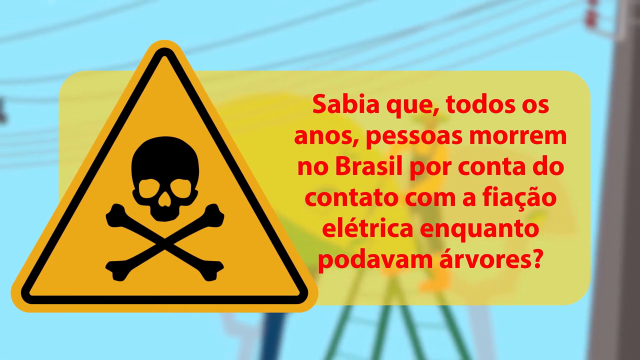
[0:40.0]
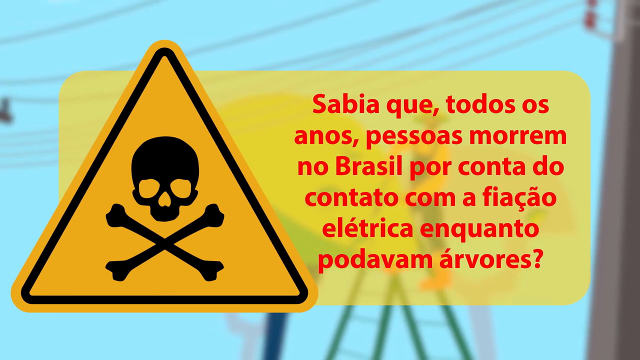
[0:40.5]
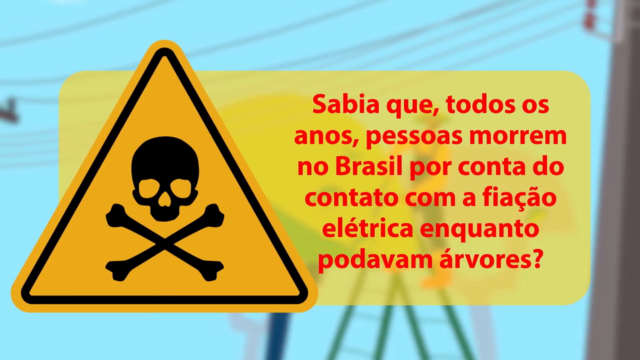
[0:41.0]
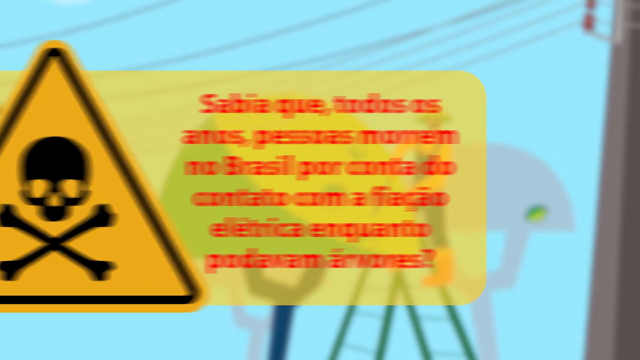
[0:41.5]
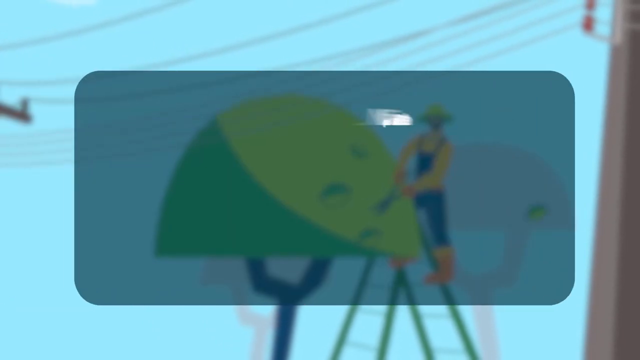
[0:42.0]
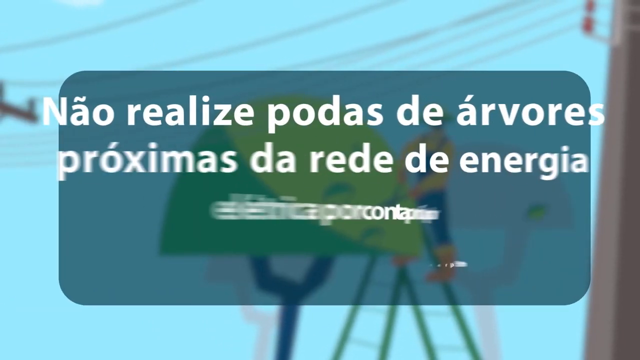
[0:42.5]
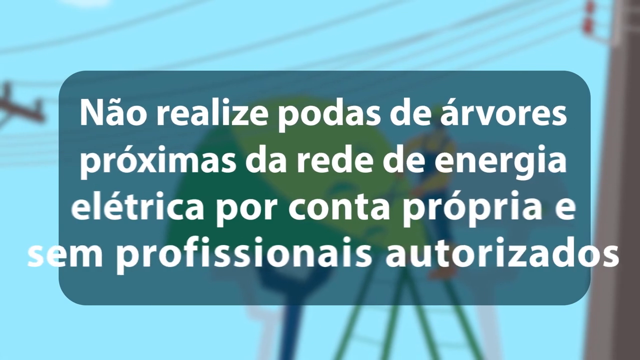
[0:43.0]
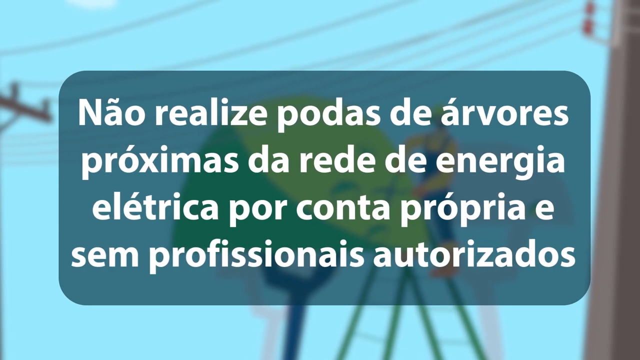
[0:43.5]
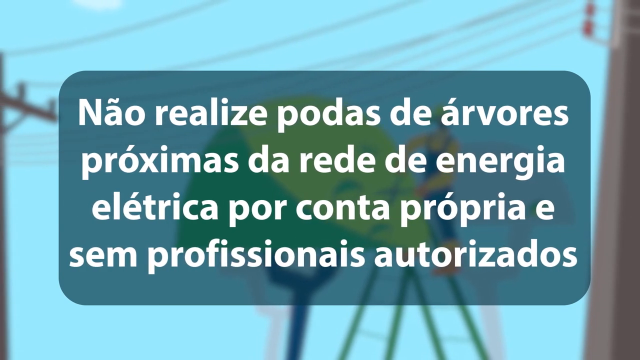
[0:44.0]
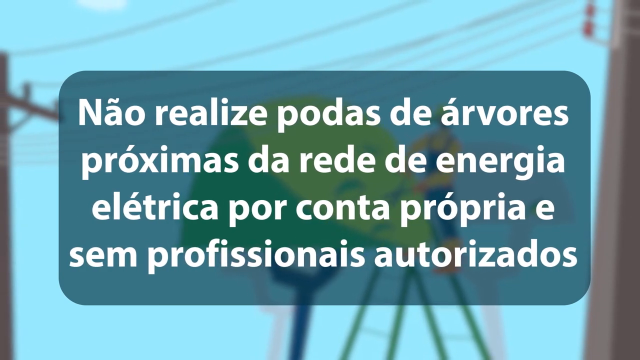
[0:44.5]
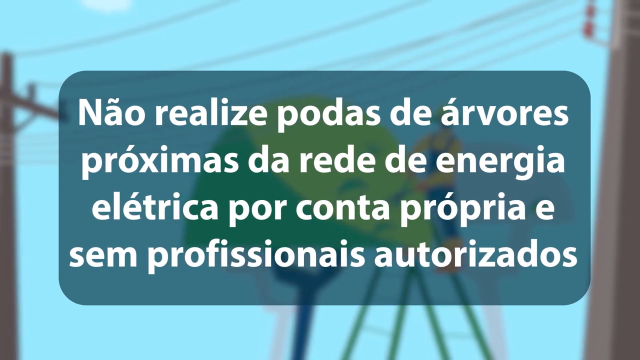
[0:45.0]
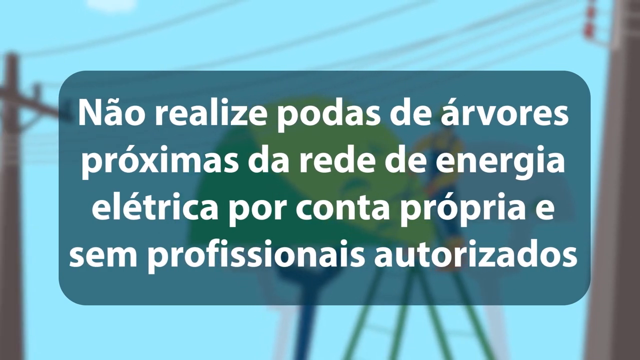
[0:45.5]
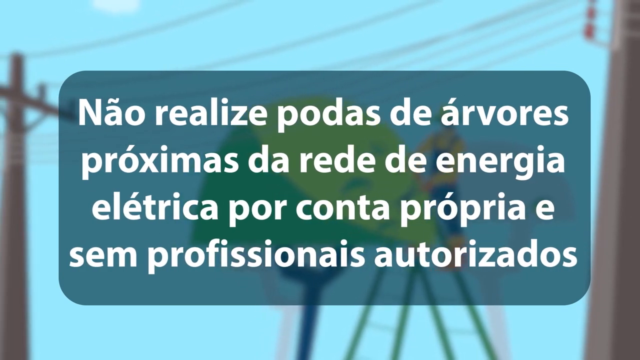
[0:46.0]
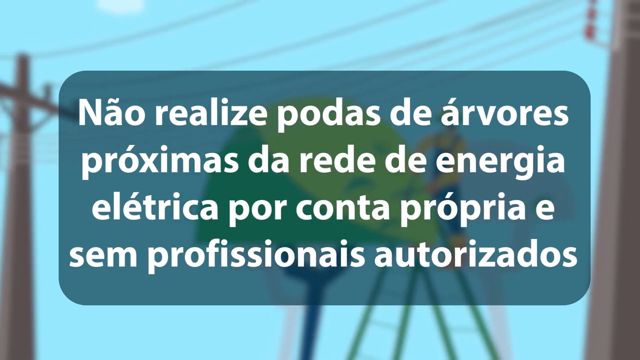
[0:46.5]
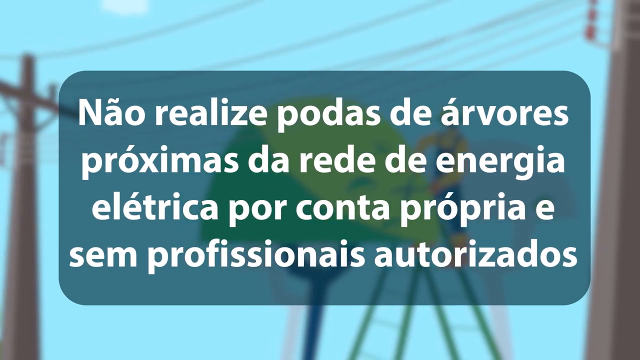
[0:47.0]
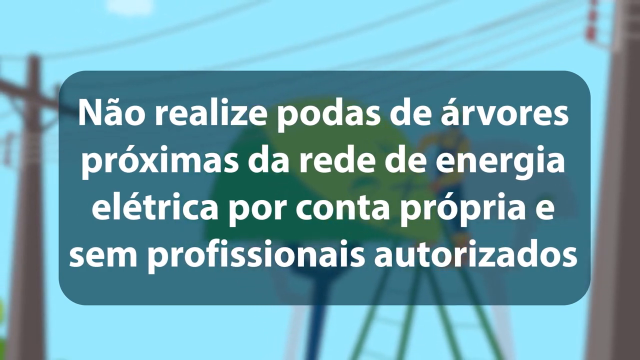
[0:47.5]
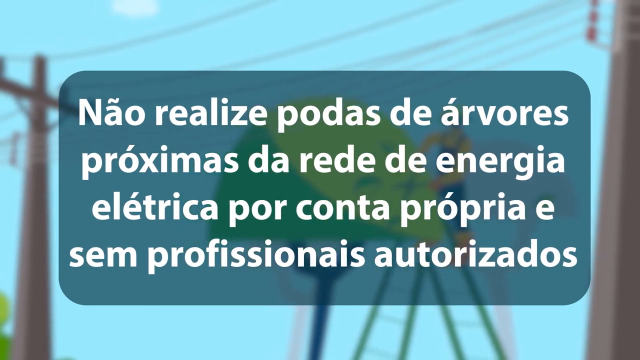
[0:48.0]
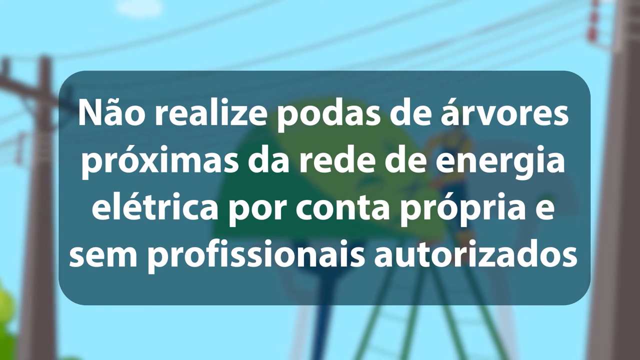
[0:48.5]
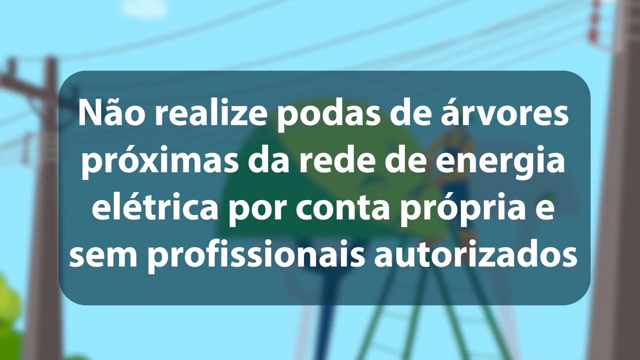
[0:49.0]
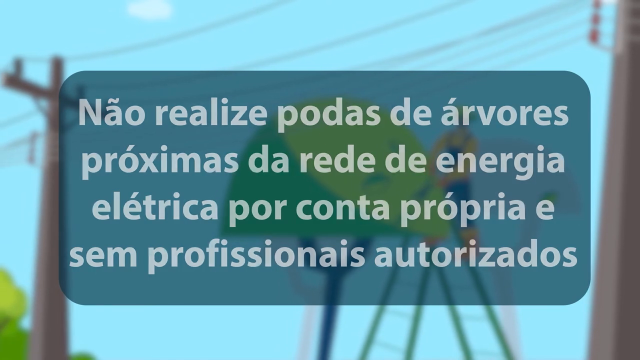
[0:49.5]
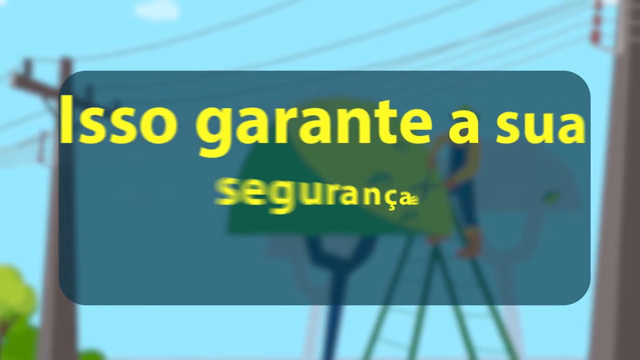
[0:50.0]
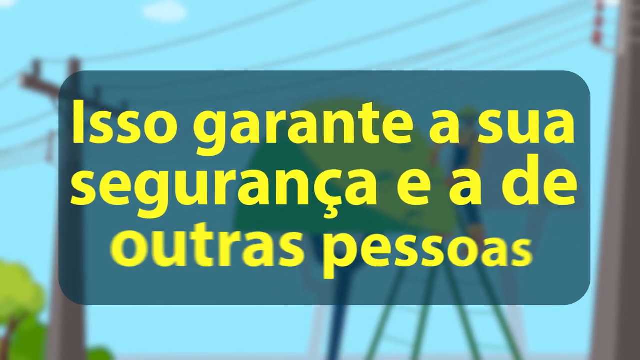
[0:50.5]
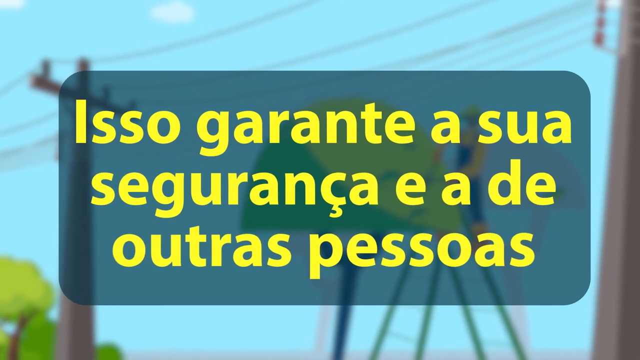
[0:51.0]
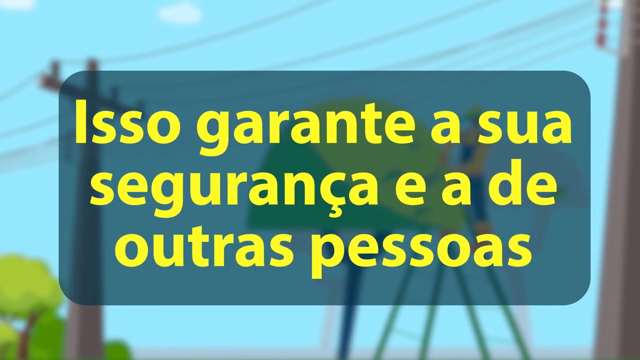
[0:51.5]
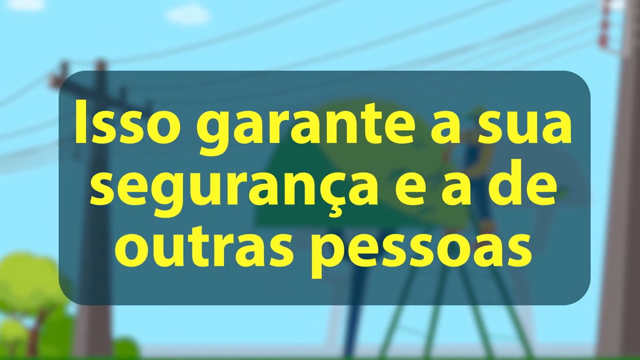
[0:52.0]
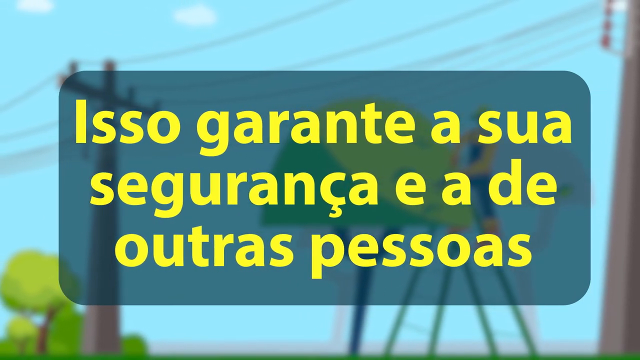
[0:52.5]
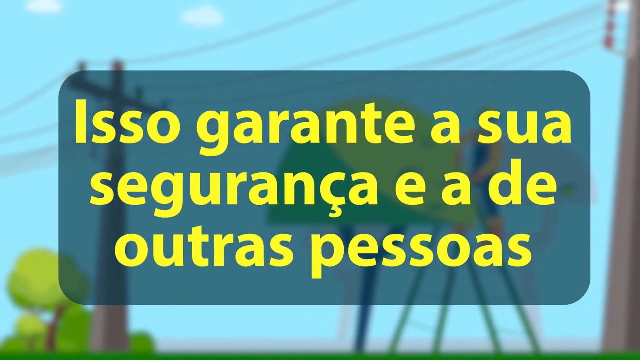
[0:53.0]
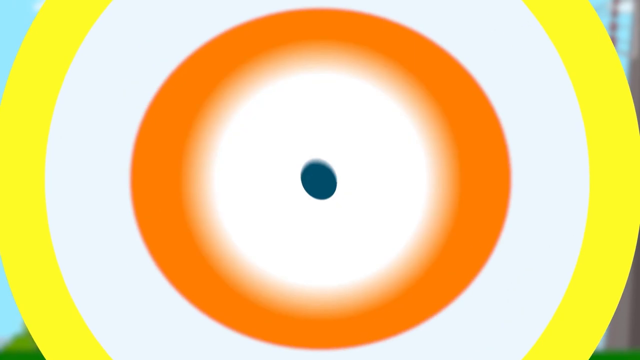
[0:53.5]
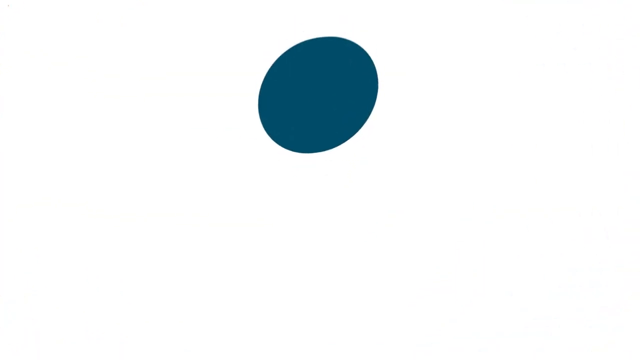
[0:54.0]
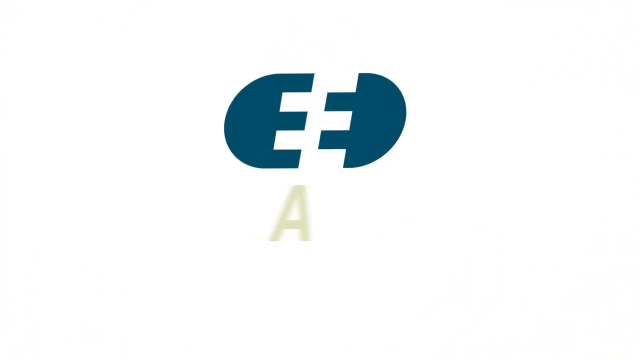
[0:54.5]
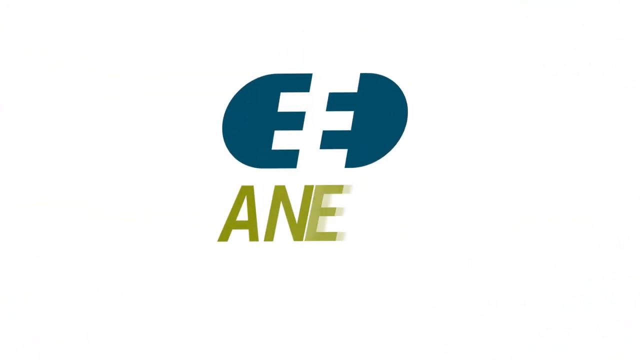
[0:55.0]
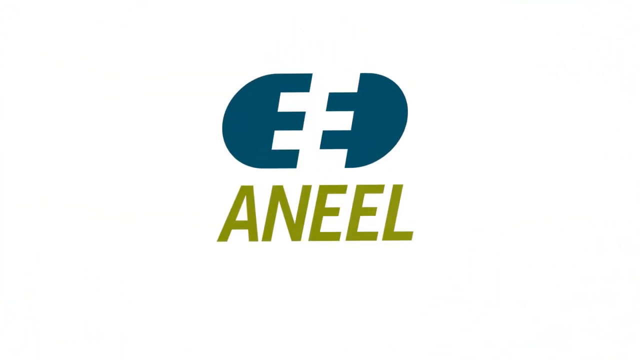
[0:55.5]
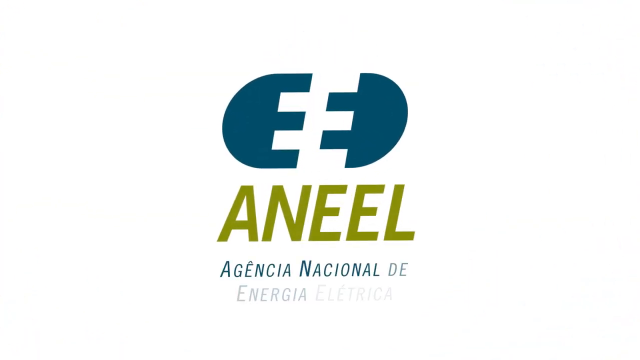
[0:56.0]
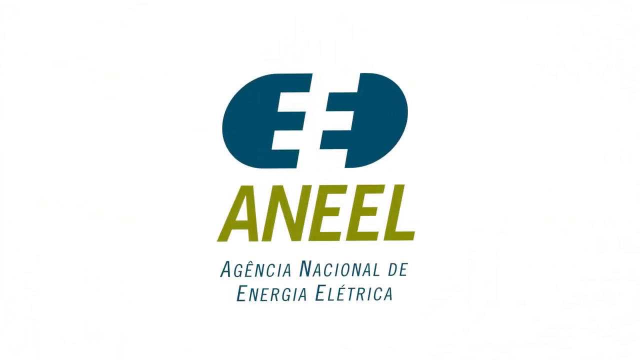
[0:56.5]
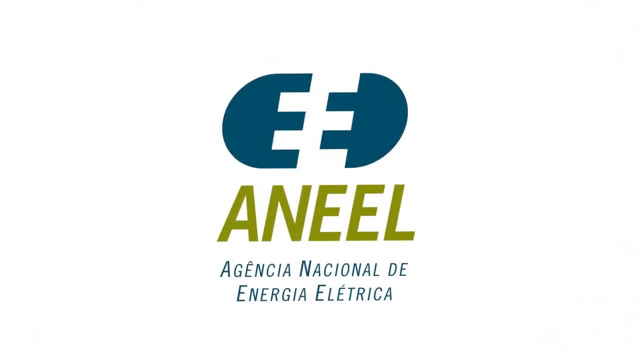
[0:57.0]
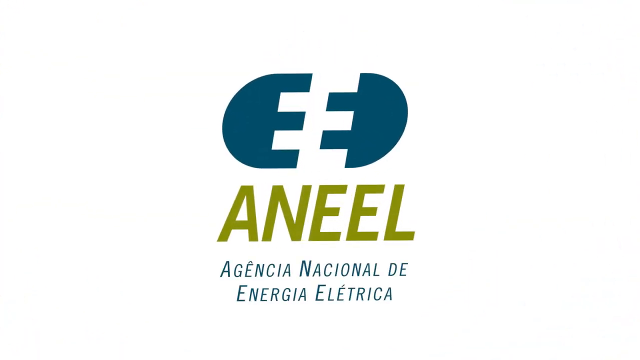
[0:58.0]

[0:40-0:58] A blue text box with white text appears over the man trimming the tree; the box is see-through, and his trimming motion continues beneath it. The box stays the same while the text changes to a shorter amount of yellow text. Using several differently colored circles, the video transitions to a white page with an interlocking, plug-in type symbol at the top followed by "Aneel", apparently a national electric company behind this video about safety near power lines.